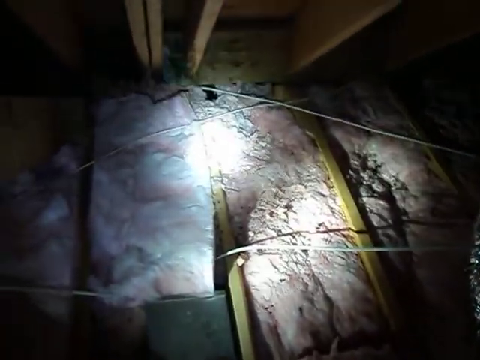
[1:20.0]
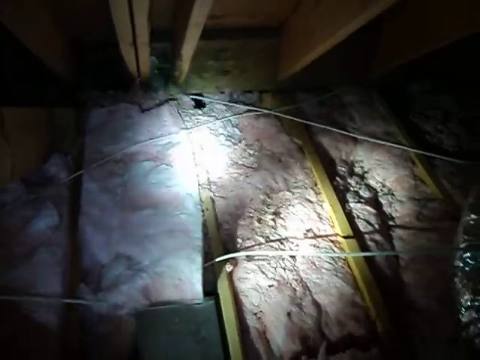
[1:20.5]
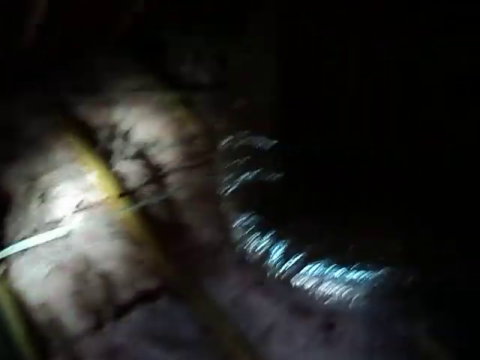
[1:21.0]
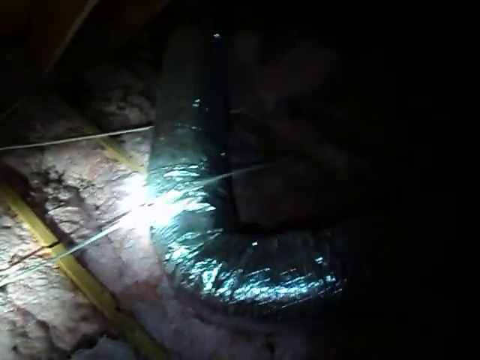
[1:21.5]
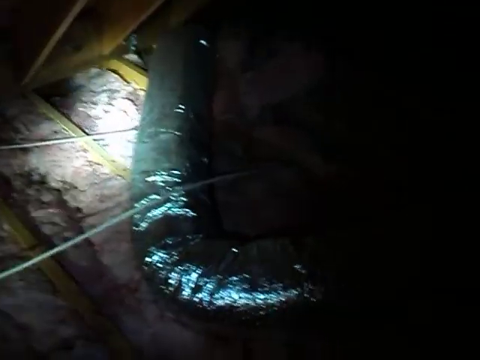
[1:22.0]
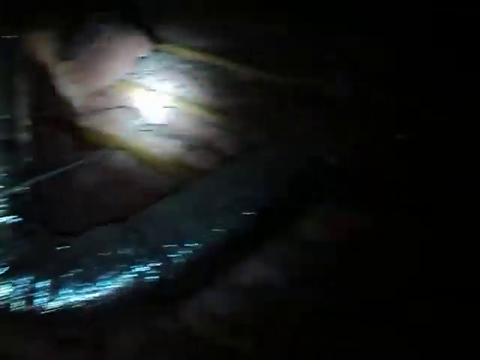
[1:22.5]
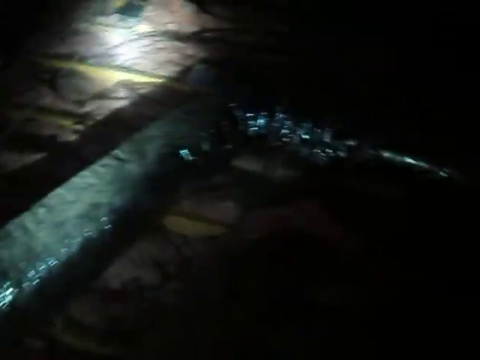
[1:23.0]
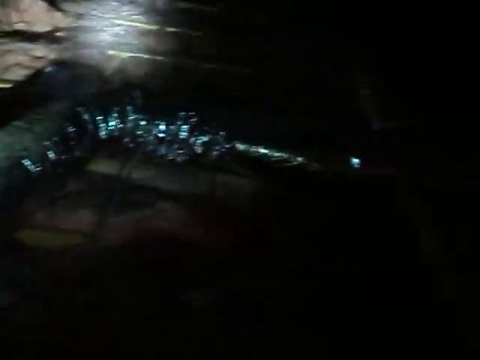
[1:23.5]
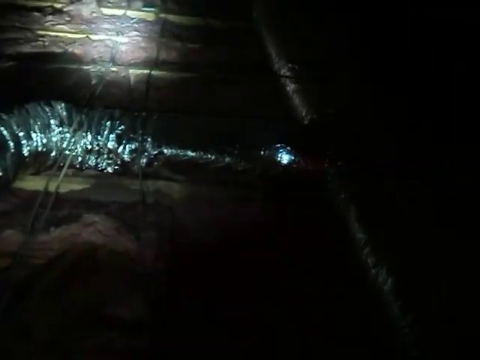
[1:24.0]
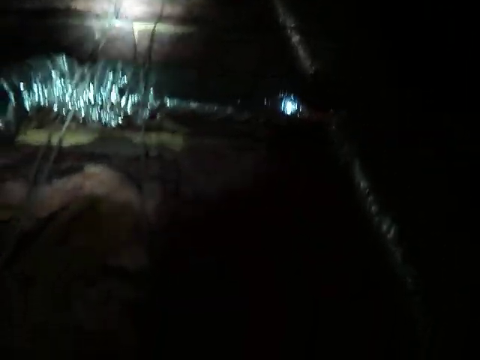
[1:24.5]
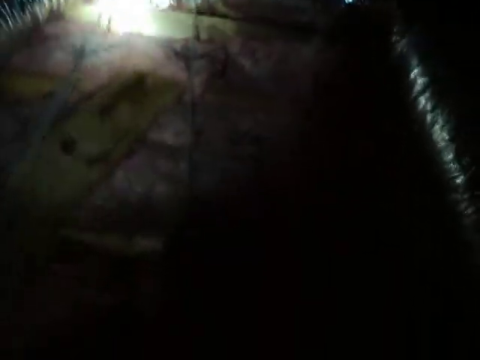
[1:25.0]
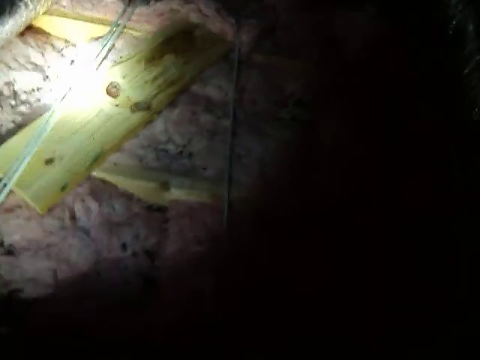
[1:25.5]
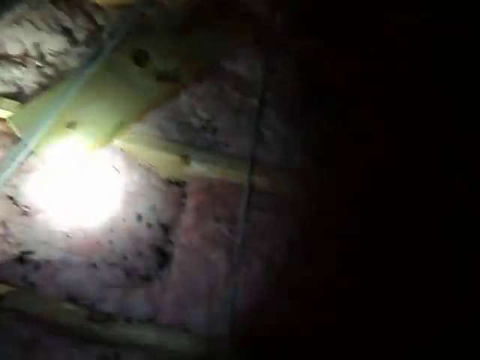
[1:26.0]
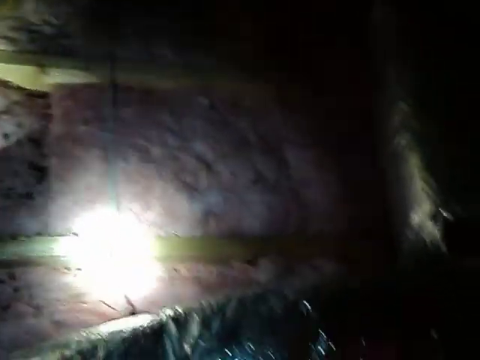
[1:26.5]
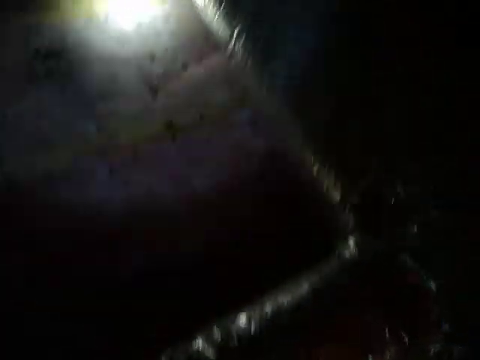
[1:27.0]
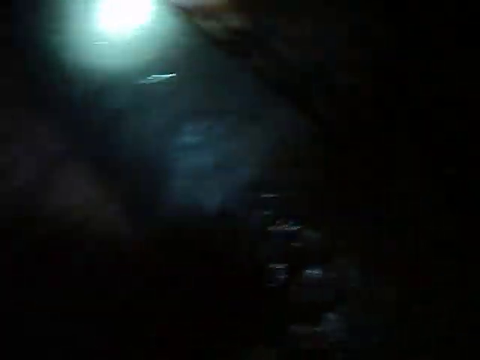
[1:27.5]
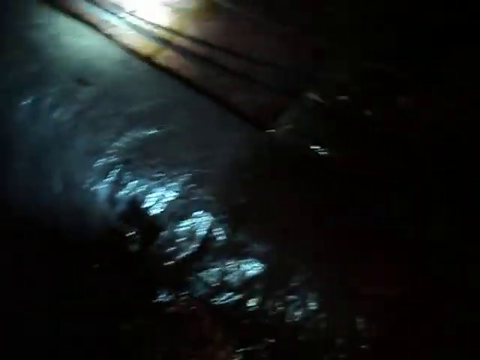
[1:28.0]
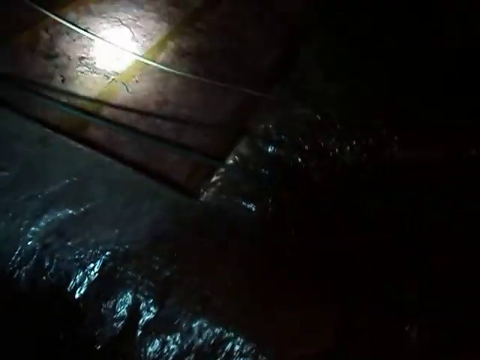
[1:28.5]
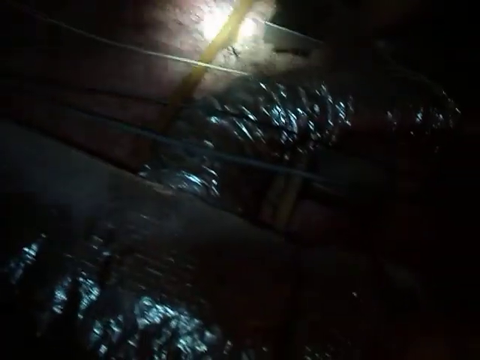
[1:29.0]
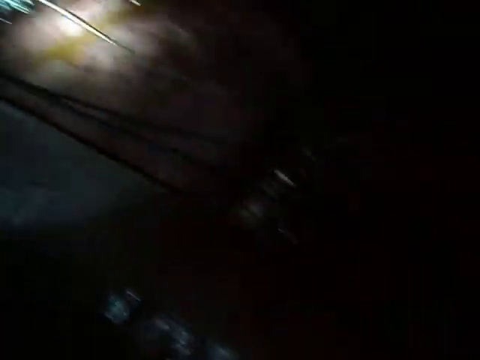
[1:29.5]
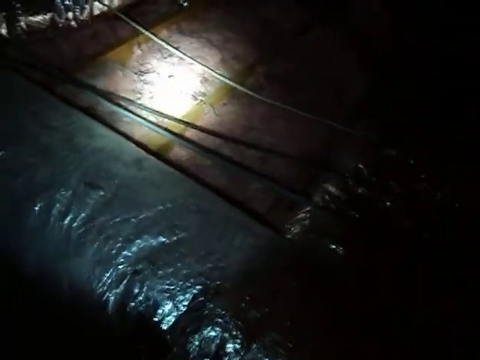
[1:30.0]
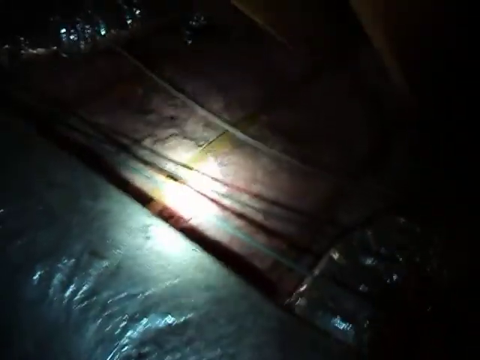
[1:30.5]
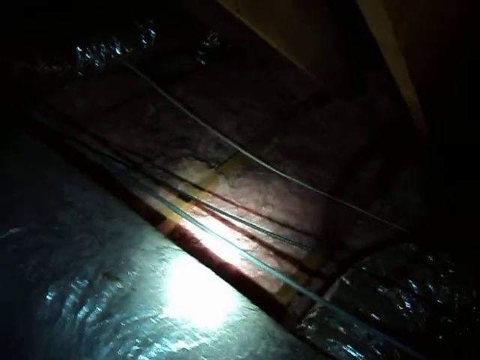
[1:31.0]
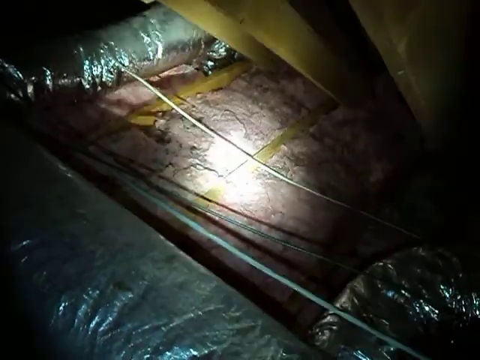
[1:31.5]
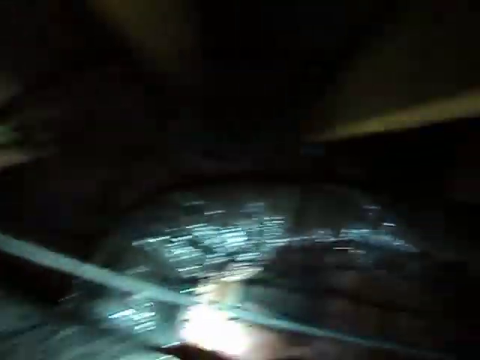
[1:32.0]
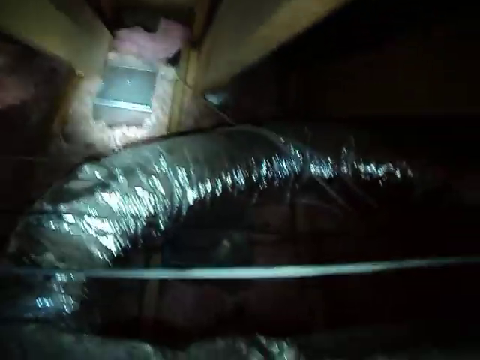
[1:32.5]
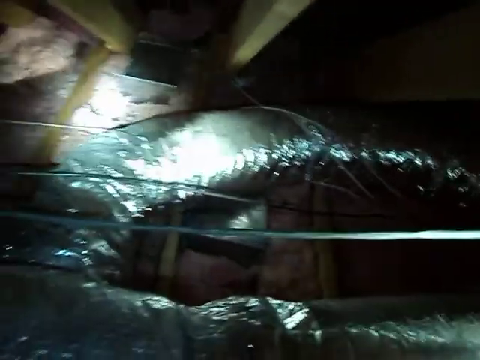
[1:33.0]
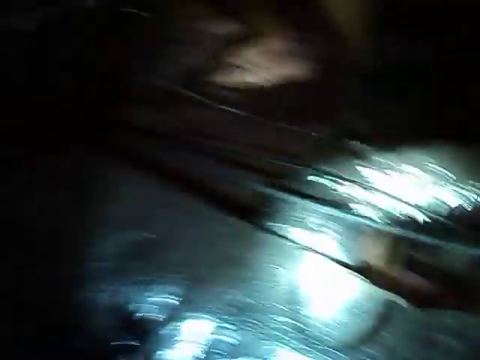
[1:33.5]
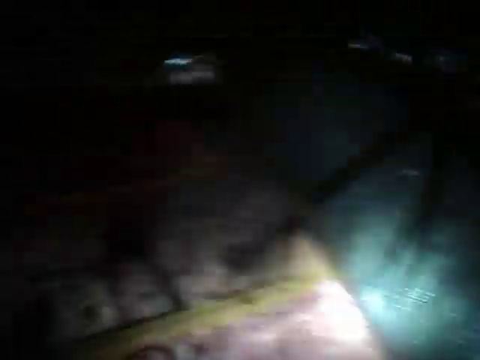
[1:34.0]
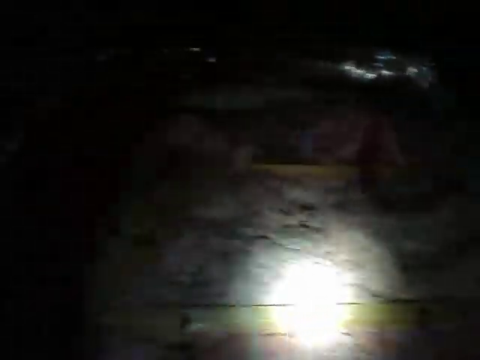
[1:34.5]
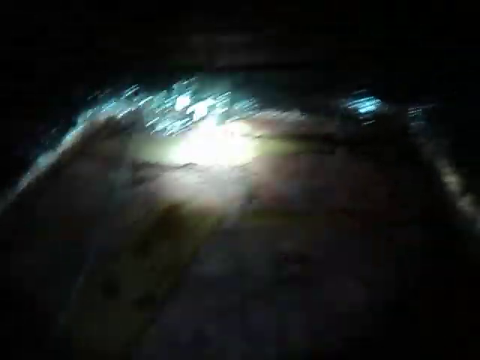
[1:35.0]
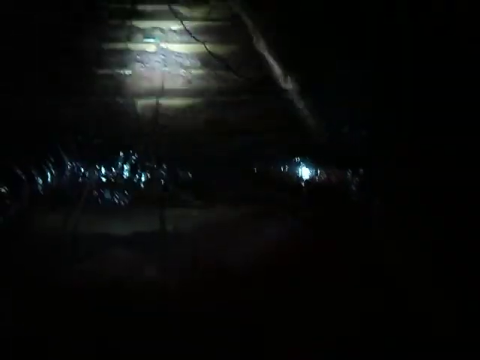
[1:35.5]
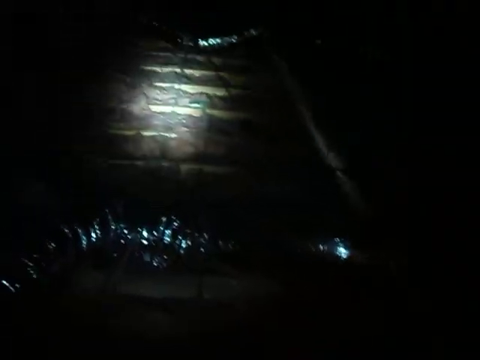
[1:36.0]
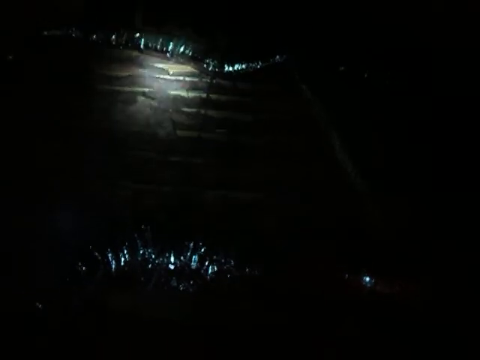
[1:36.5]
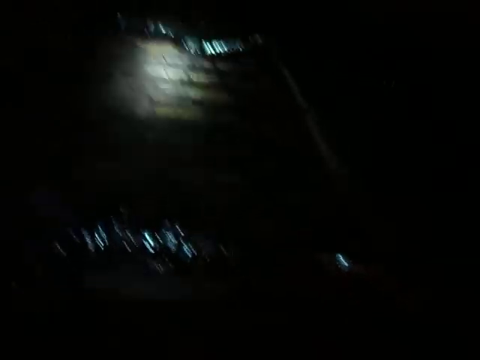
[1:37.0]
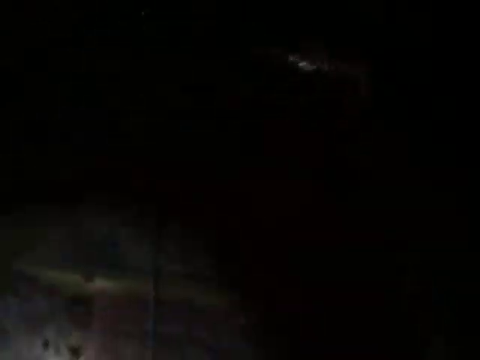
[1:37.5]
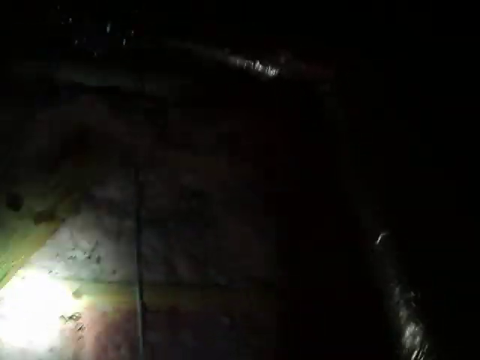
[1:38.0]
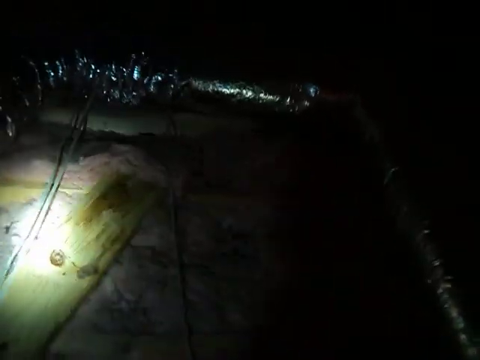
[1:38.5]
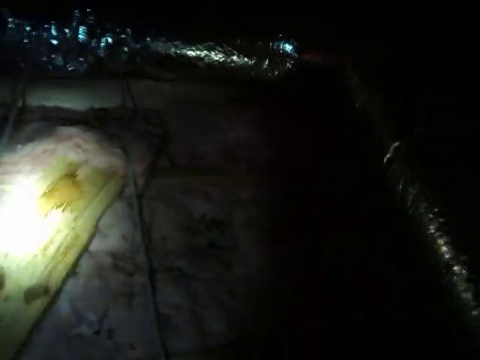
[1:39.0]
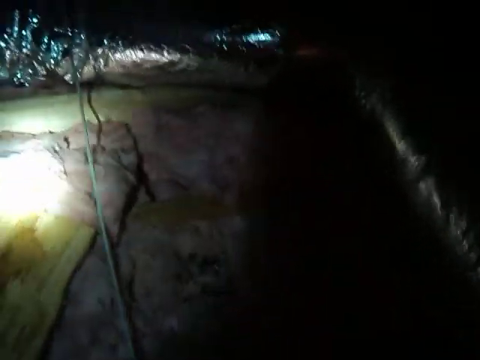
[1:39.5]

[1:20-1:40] The attic is dark, so the person filming uses a flashlight, which moves around; the handheld camera is a little shaky. The light illuminates some of the batt insulation on the attic floor between the floor joists. The light somewhat pans to the right in a sweeping motion, comes down toward the camera, and goes back up. The whole time the pink batt insulation is in view. The light is moved to different parts of the attic, bopped over to some of the AC ducts, where the silver reflects the light, and then put back onto a different part of the attic. The light seems to move all over the place; the focus is hard to tell, though it is maybe the insulation.